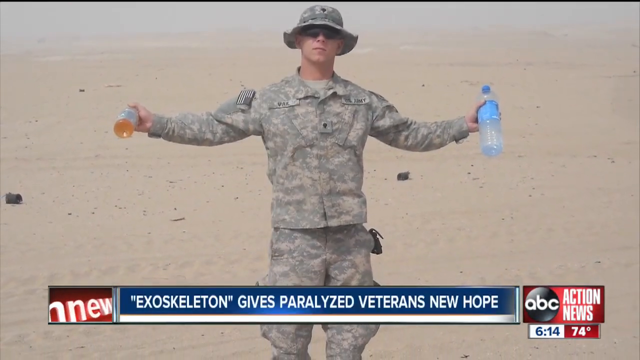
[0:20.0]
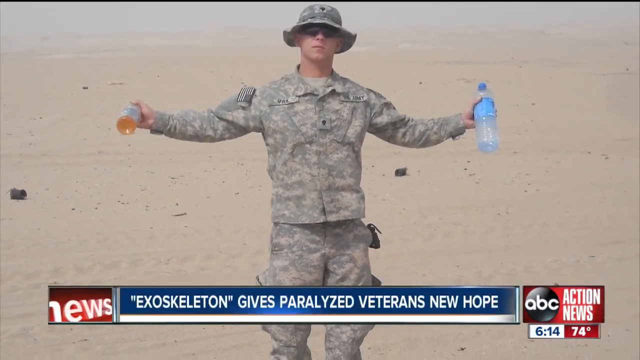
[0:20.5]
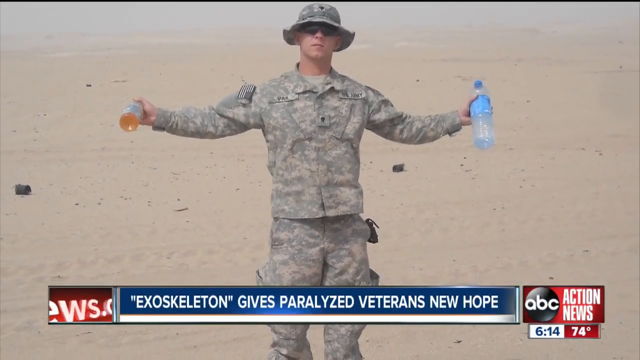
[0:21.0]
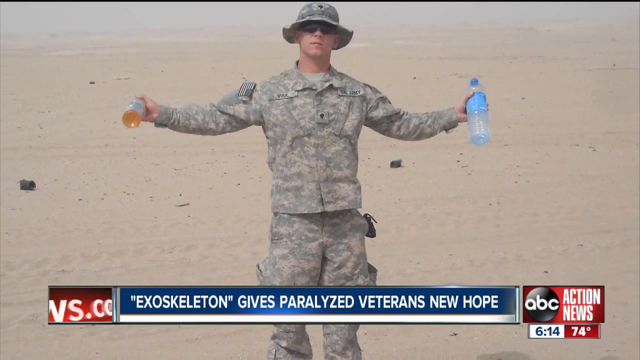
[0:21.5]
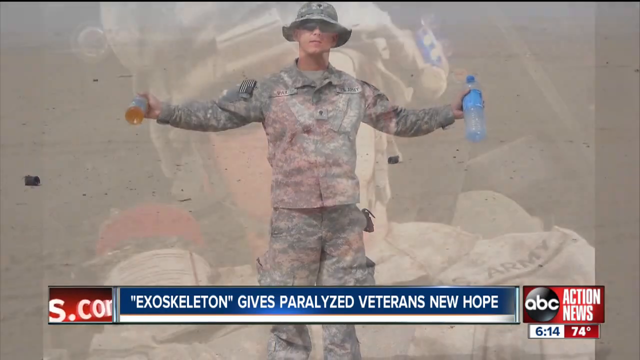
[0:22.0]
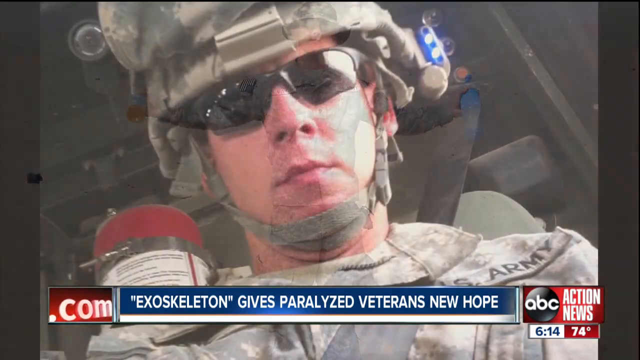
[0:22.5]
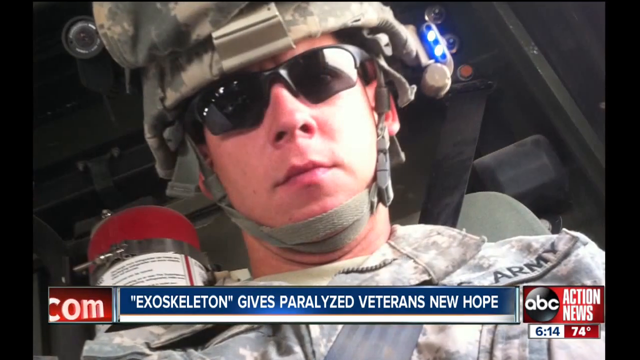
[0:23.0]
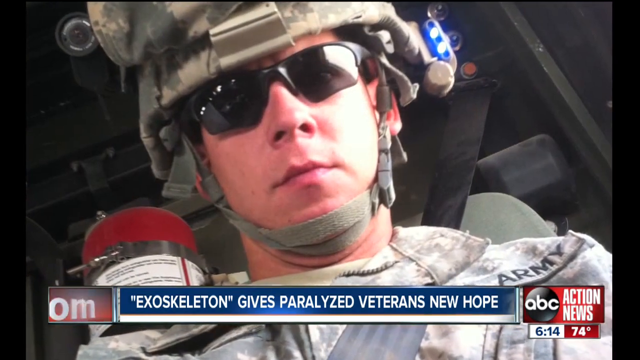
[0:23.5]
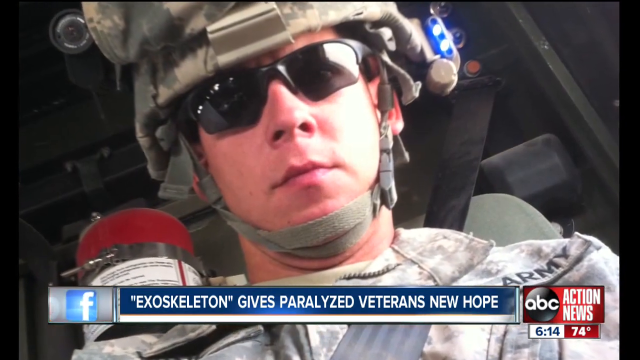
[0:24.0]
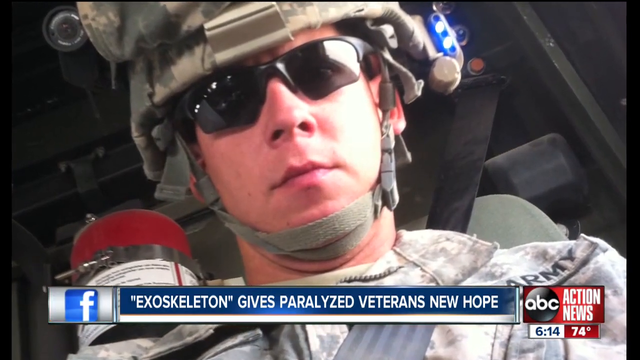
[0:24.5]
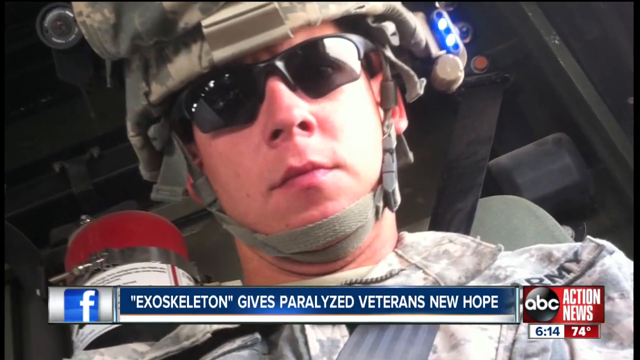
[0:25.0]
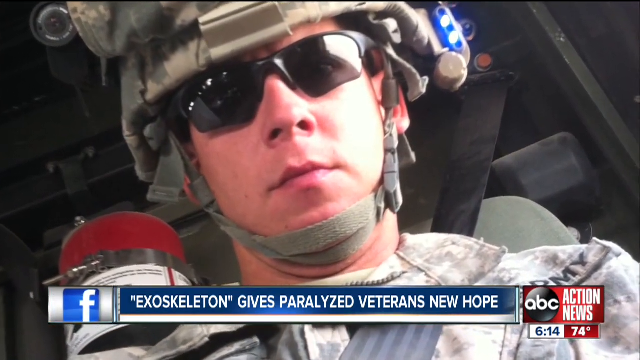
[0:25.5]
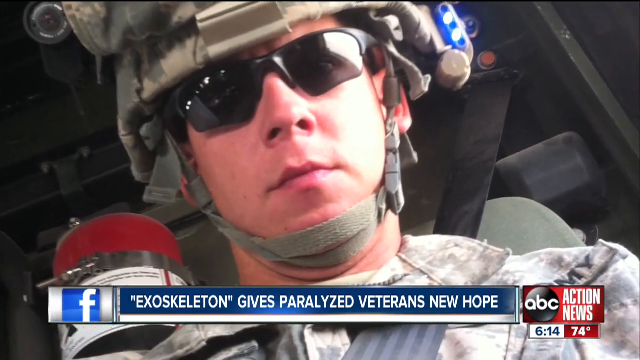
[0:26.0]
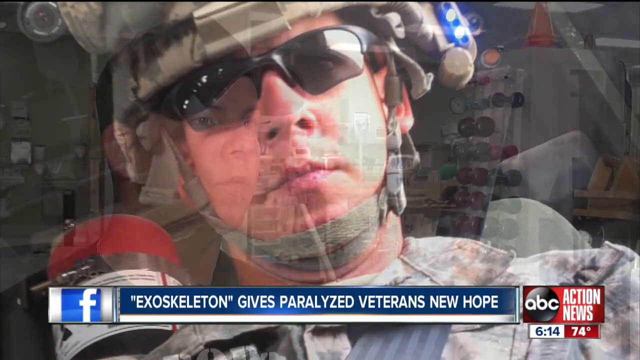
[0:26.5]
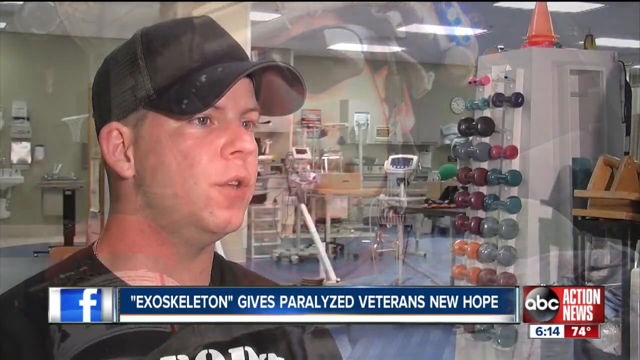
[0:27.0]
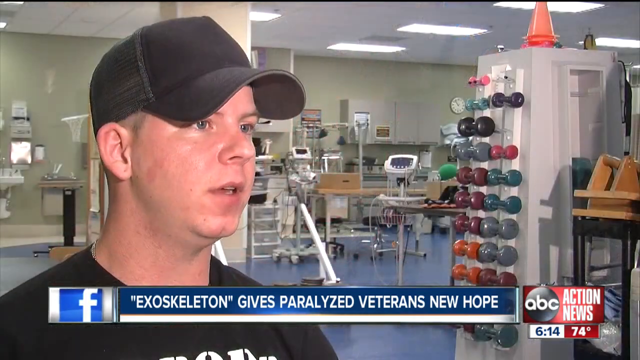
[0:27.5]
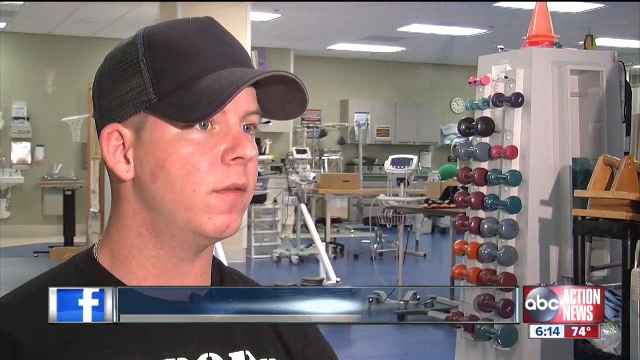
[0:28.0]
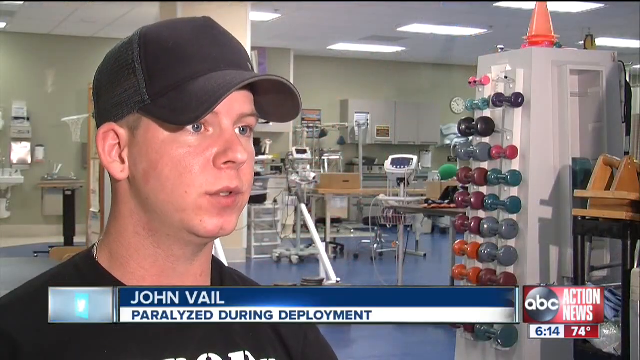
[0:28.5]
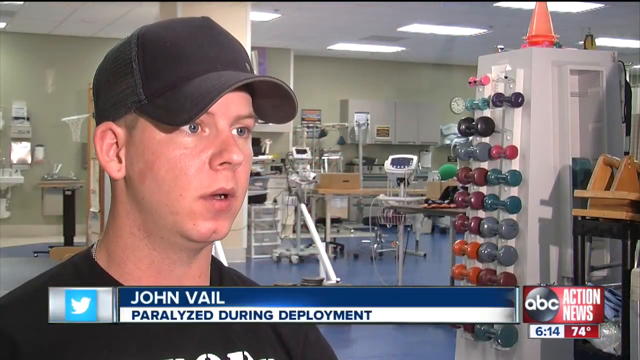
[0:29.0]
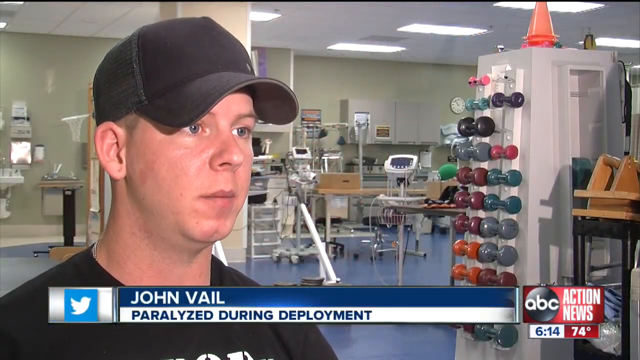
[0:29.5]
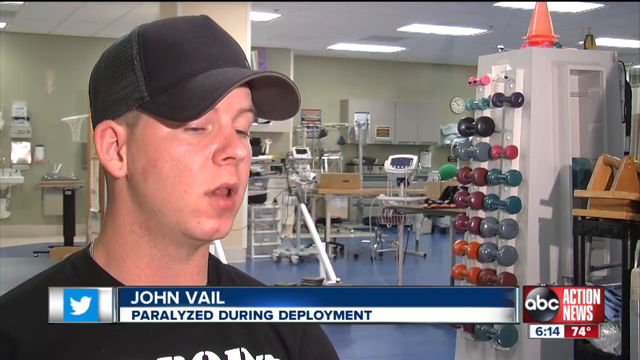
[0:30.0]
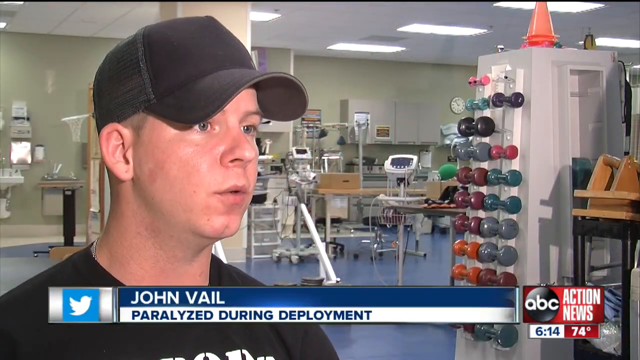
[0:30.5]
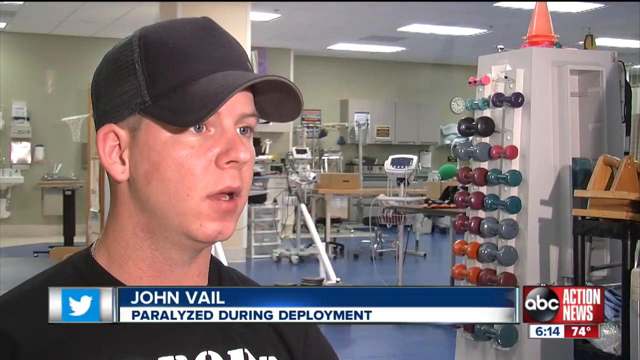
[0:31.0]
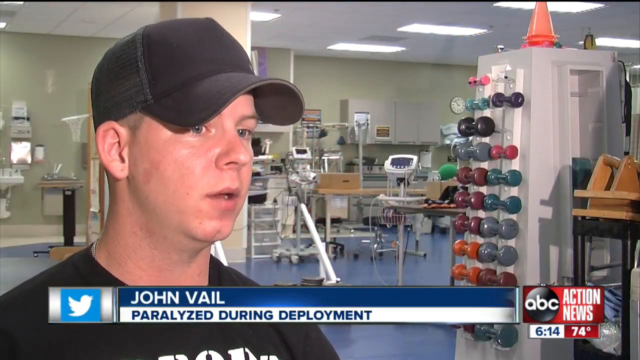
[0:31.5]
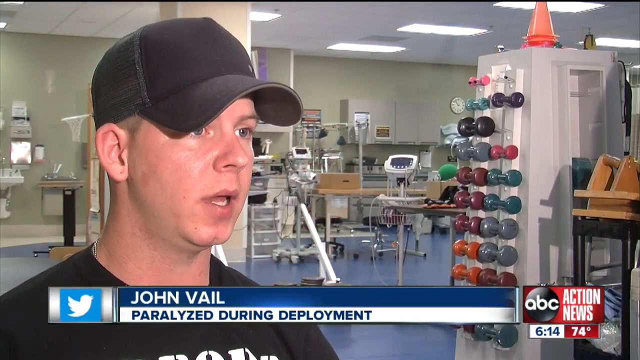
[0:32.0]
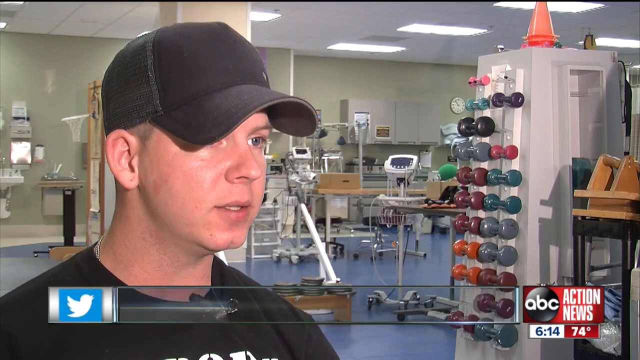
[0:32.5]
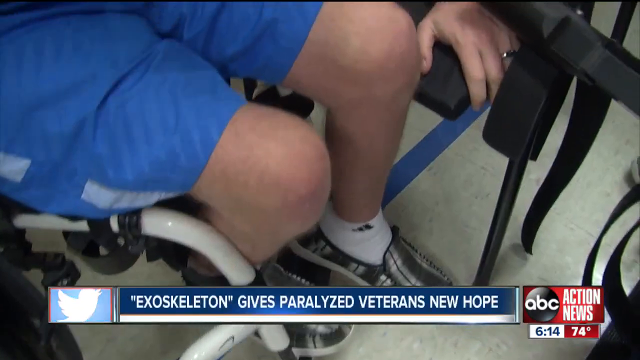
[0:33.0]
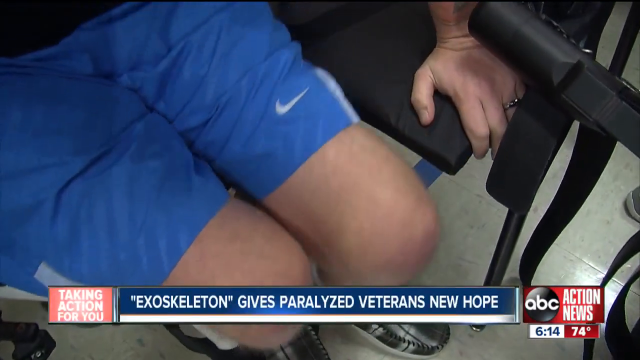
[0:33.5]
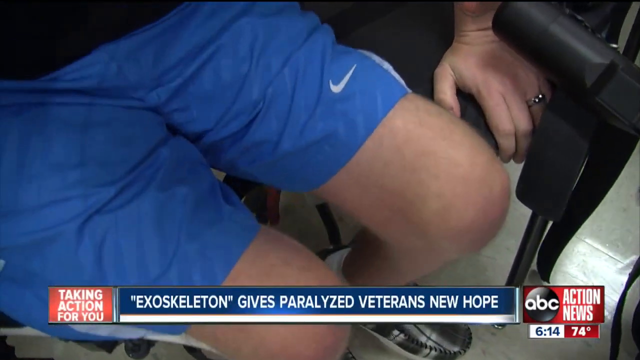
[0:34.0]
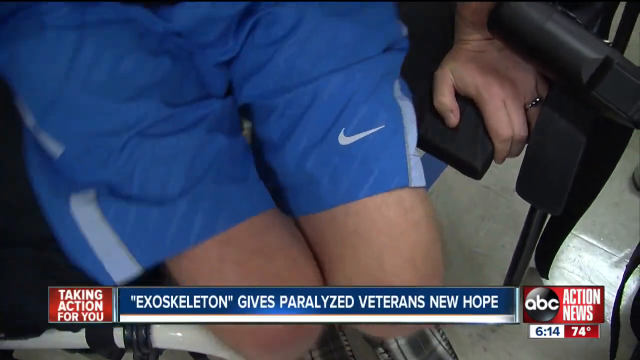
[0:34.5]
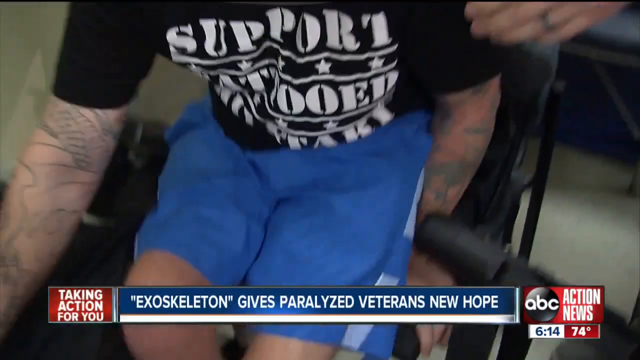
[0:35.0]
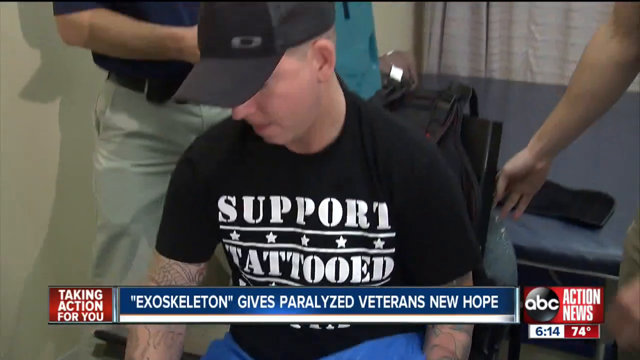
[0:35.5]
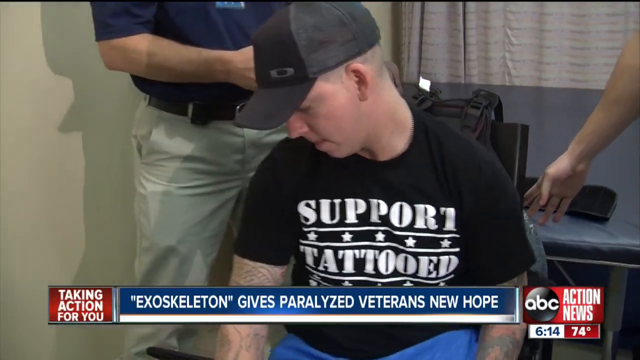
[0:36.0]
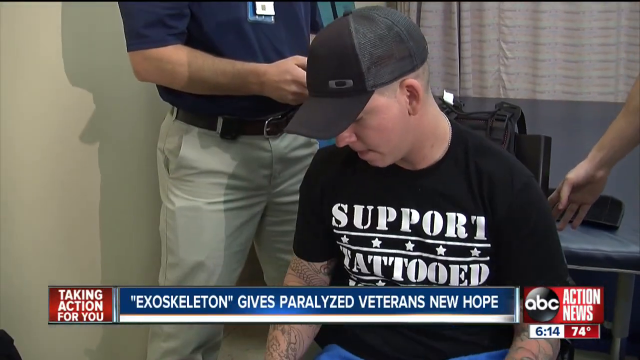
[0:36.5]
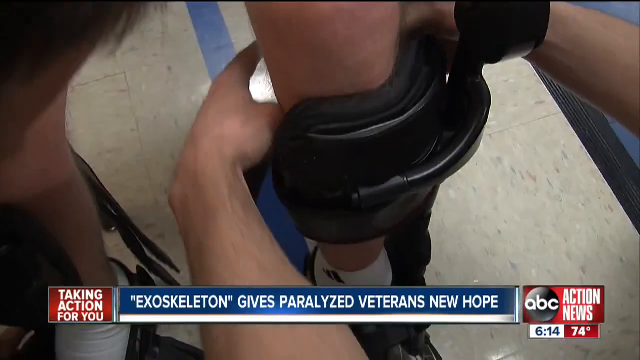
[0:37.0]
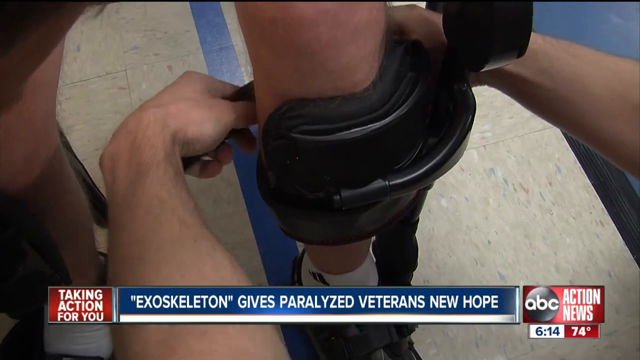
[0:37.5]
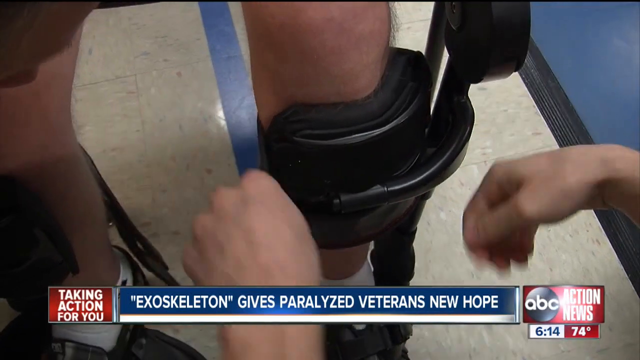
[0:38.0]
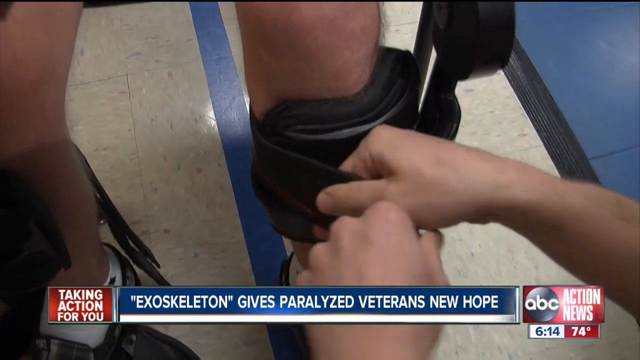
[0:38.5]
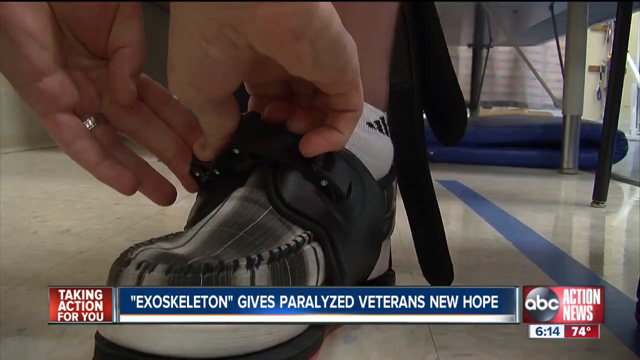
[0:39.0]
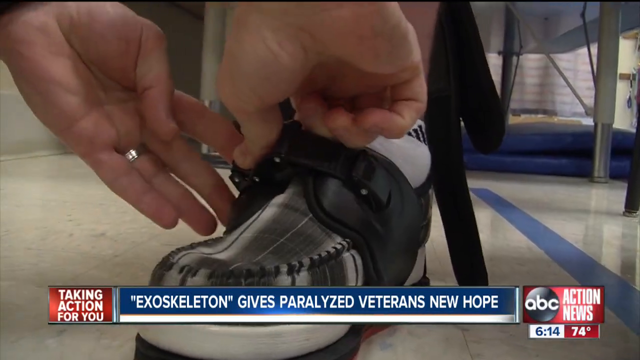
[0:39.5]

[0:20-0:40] In this ABC News segment, a soldier in desert fatigues, a hat and sunglasses stands with his arms spread to his sides, holding plastic bottles: a water bottle in his left hand and a flavored drink that looks orange in his right. A close-up of a soldier's face follows; "army" is embroidered on his left chest. He is in full body gear, appears to be in a Humvee, and wears dark sunglasses while looking directly at the camera. The scene shifts to a physical therapy room with dumbbells and monitoring equipment, where a man named John Vail is being interviewed; text beneath his name says he was "paralyzed during deployment." He wears a black baseball cap and a black t-shirt and shakes his head no, as if a bit upset. He is then helped into a wheelchair by two men. His legs look small, and they secure his legs to the wheelchair.